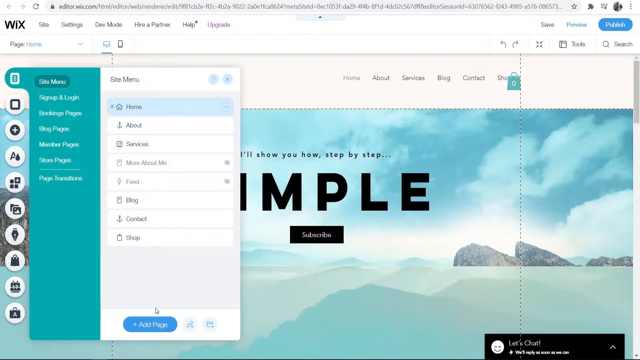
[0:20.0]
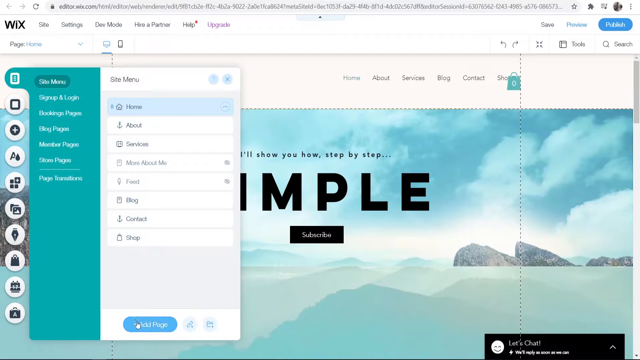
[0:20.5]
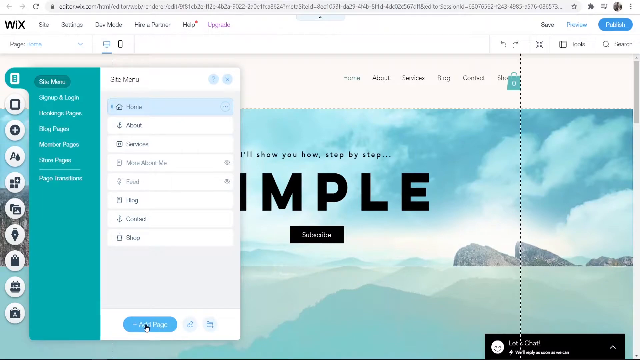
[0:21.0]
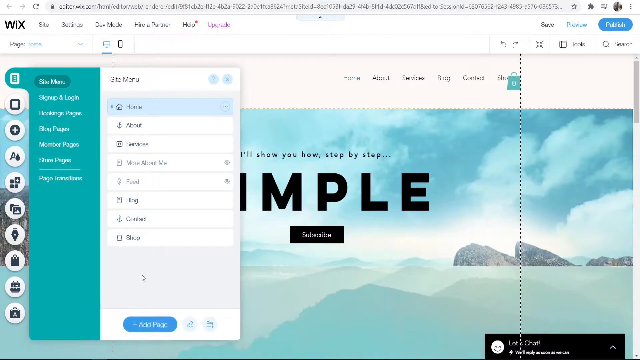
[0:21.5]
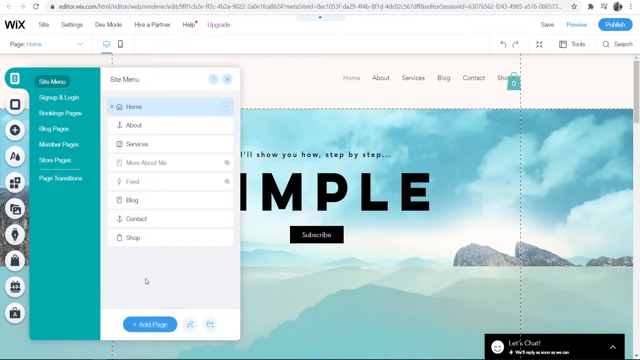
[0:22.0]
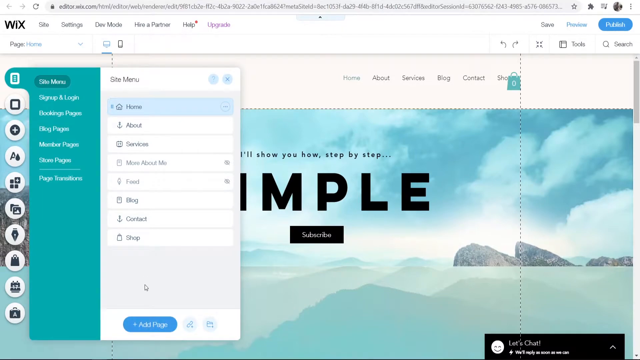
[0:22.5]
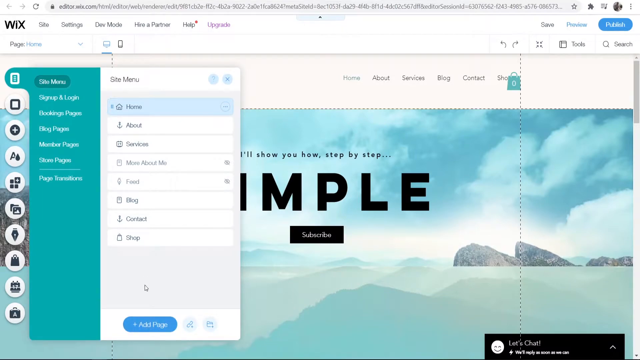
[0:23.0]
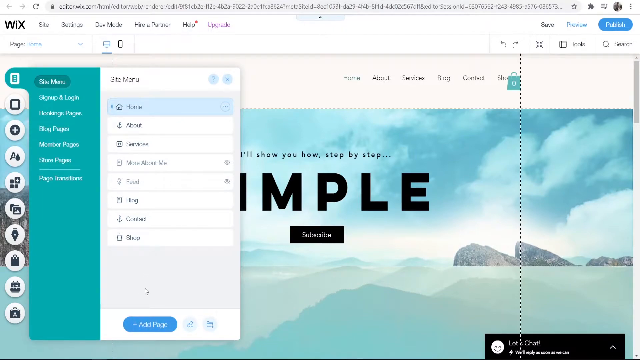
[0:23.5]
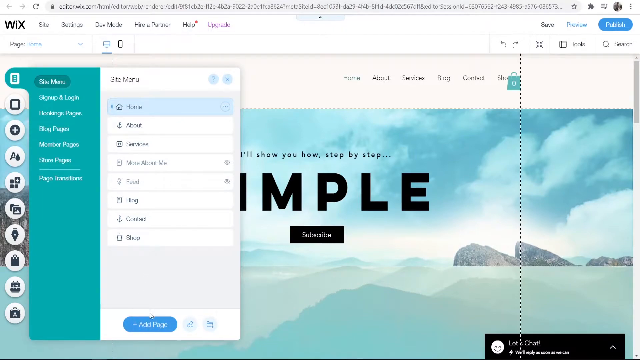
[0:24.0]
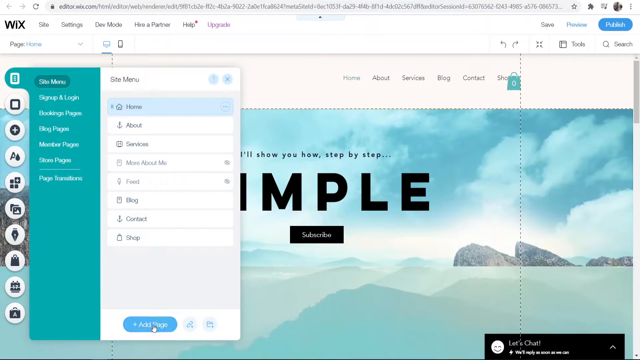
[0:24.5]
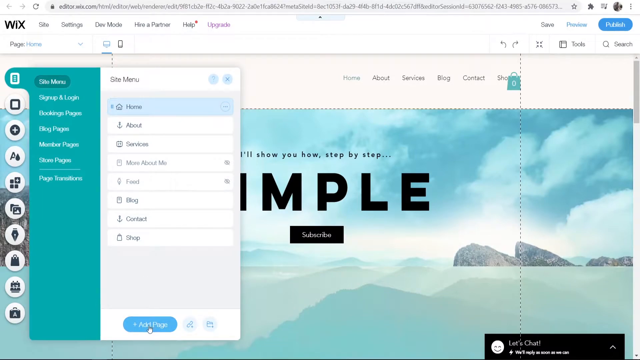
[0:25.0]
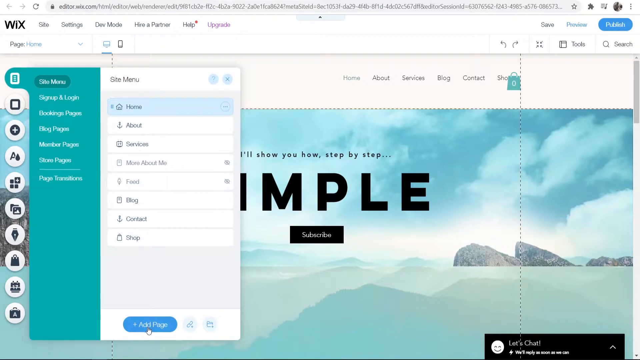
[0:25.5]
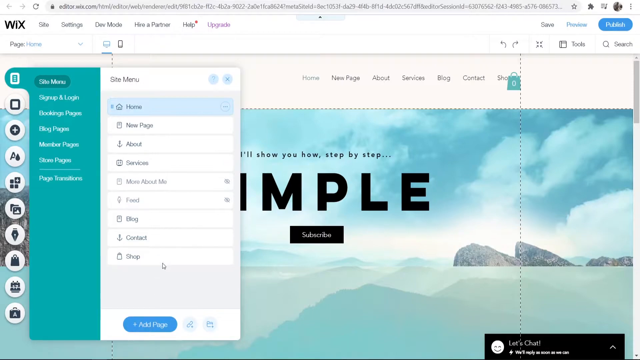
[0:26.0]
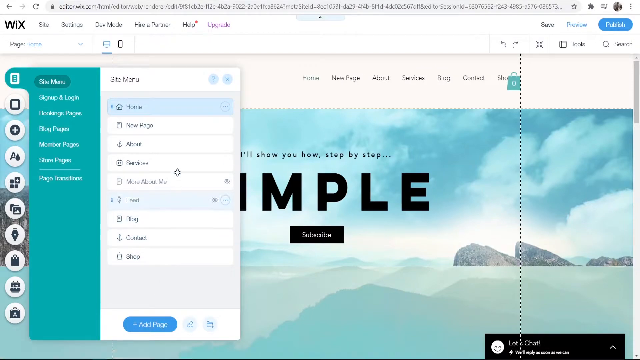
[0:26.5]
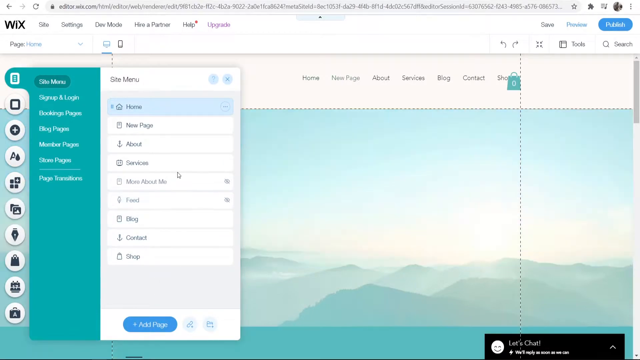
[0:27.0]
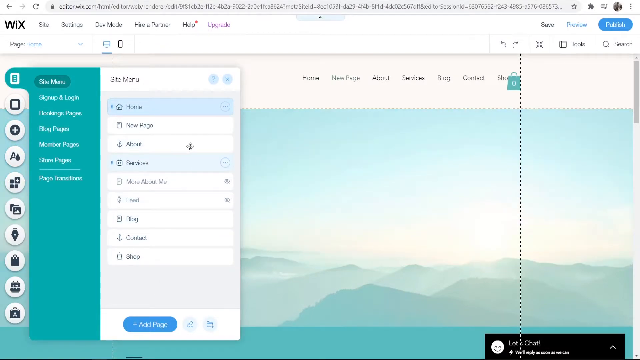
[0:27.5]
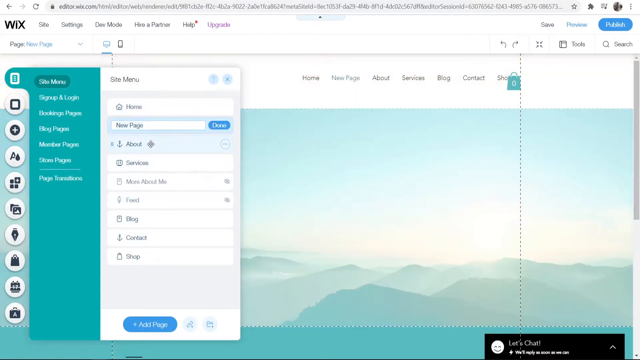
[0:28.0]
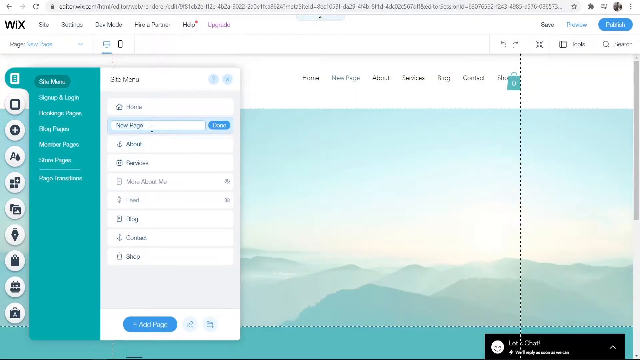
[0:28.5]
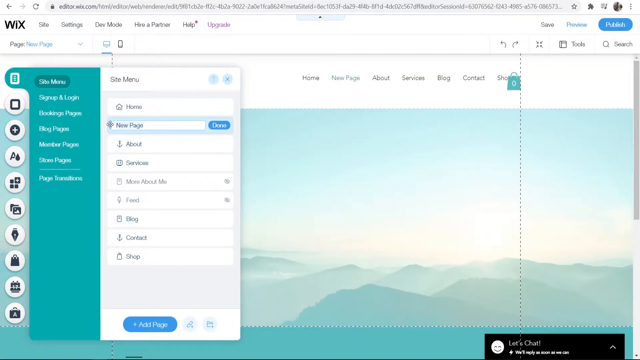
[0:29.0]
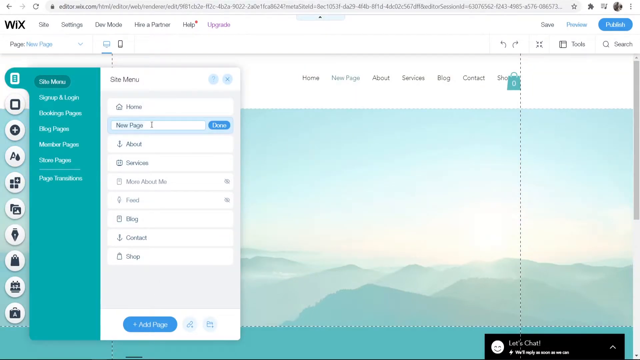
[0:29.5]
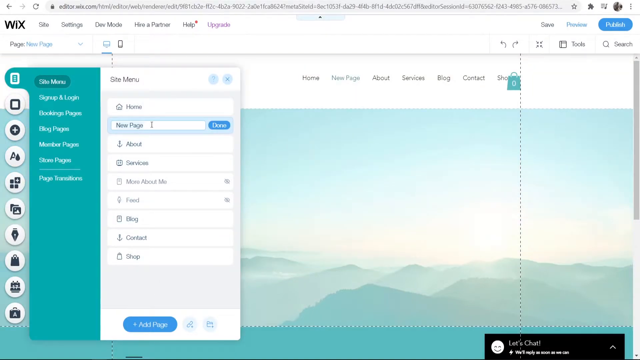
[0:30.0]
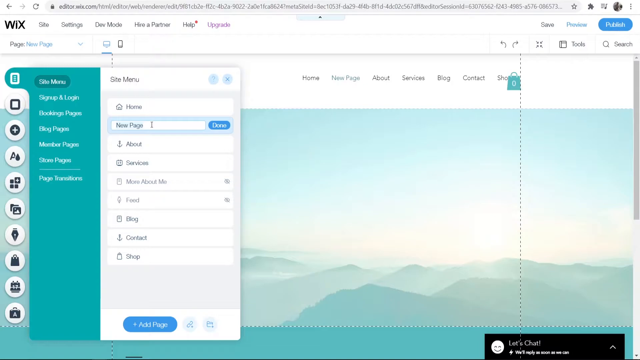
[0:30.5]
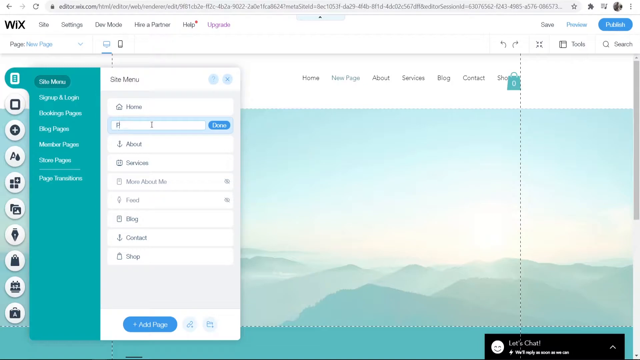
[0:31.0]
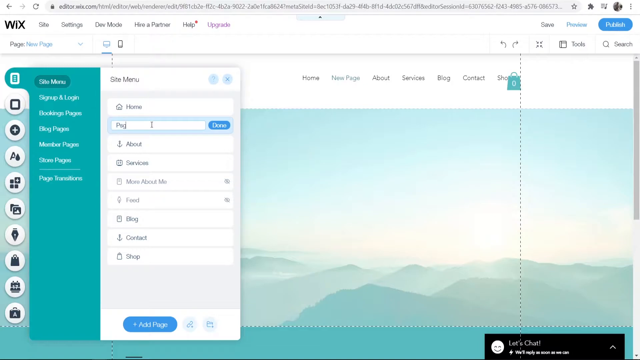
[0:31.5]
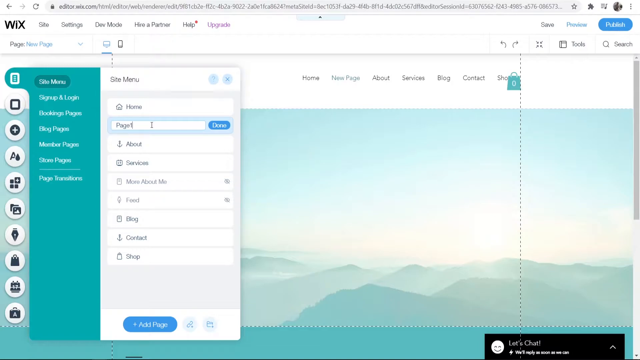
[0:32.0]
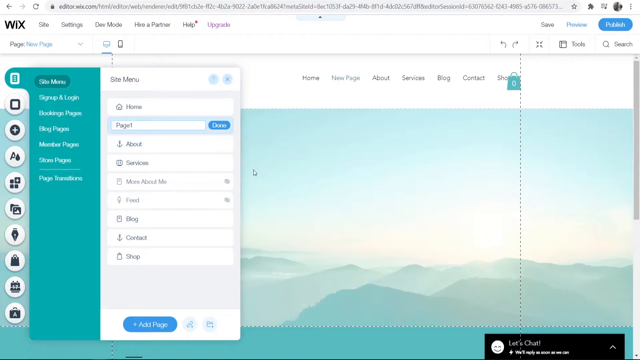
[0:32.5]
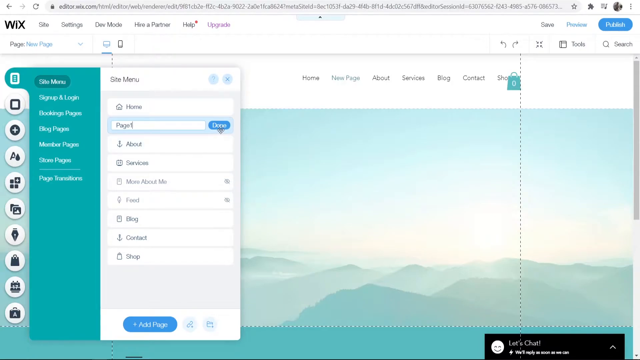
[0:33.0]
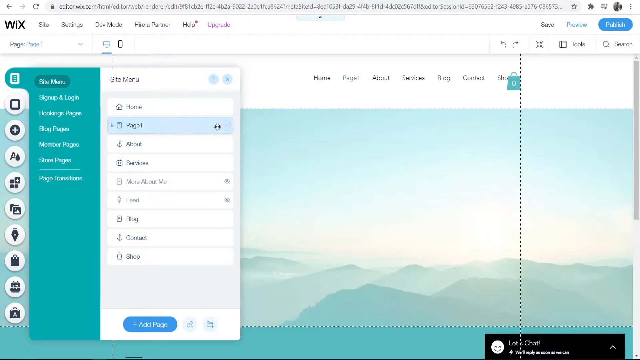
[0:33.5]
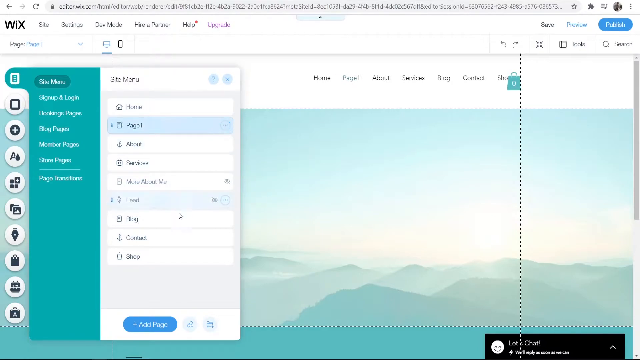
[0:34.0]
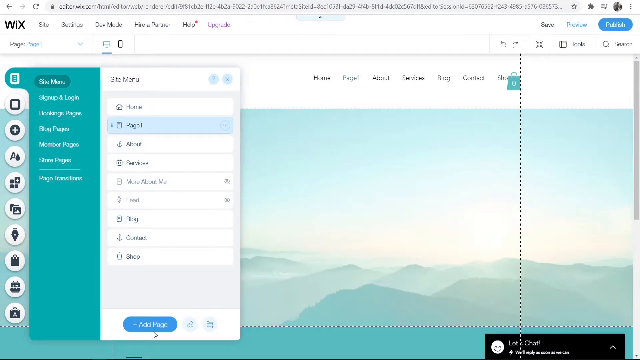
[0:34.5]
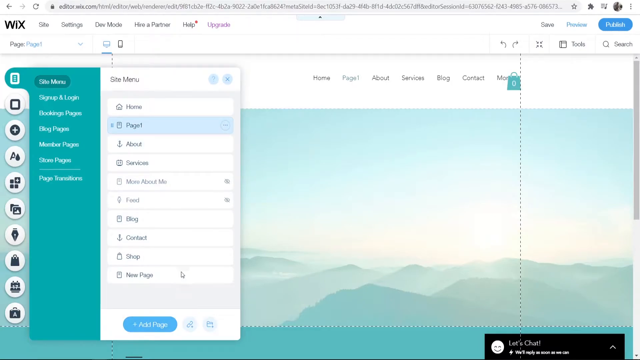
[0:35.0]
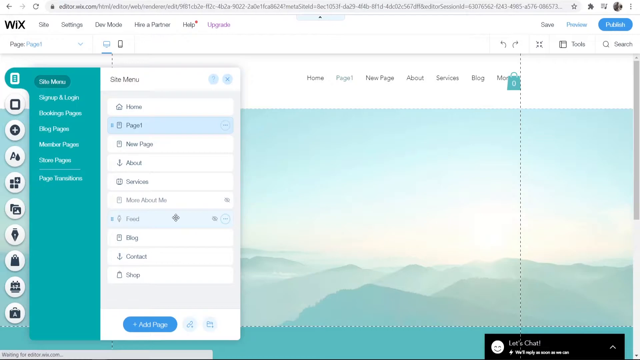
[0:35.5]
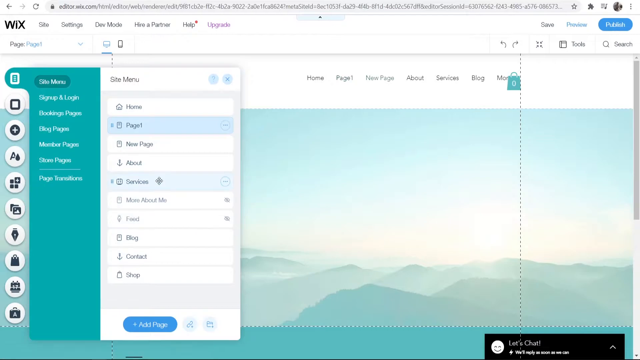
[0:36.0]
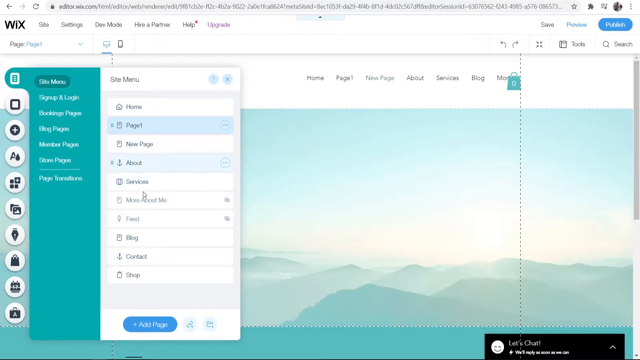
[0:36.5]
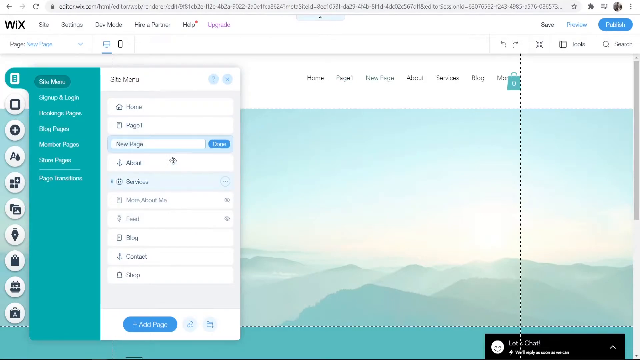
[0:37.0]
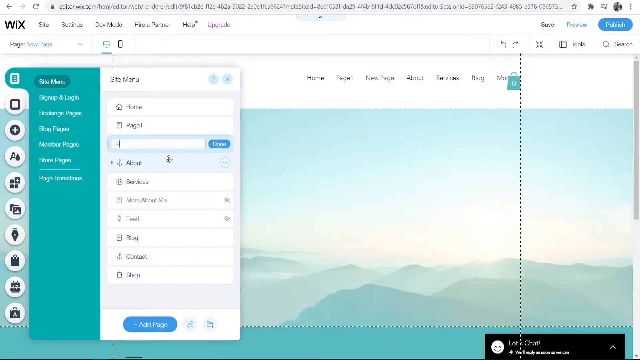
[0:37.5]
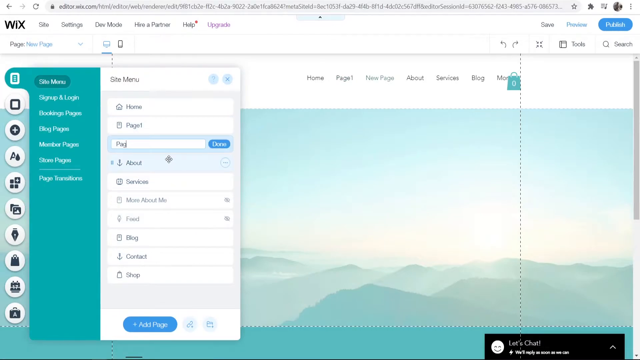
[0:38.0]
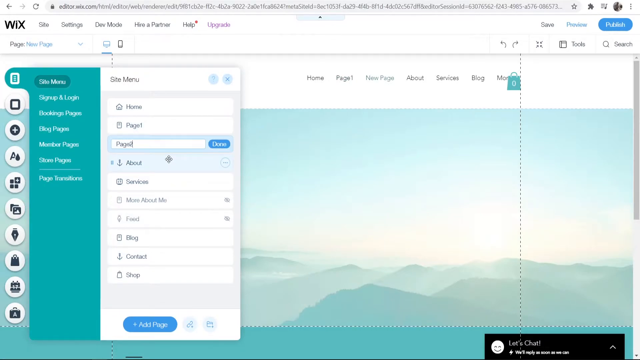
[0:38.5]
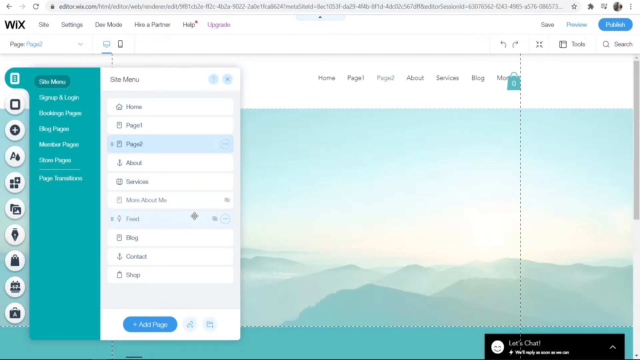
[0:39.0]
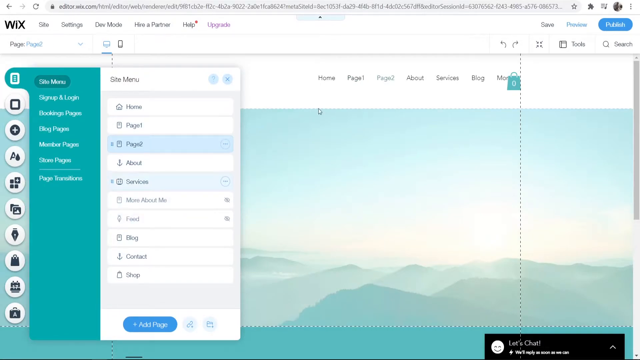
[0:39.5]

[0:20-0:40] The site menu is shown, and they go to home and click the Home button, then the three things where a page can be added. They add page one, then add another page. The cursor moves around slightly sporadically. On the left side of the screen is the blue or teal site menu with sign up and login, bookings, blog and so on, and on the left is the same site menu with home, about, services, more about me, feed, blog, contact and shop. They type in page one and add it, then type in page two and add it. Part of the "SIMPLE" text is still visible in bold black in the background of the mountaintop view.